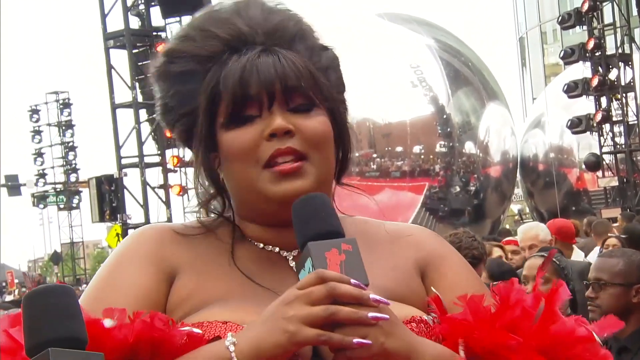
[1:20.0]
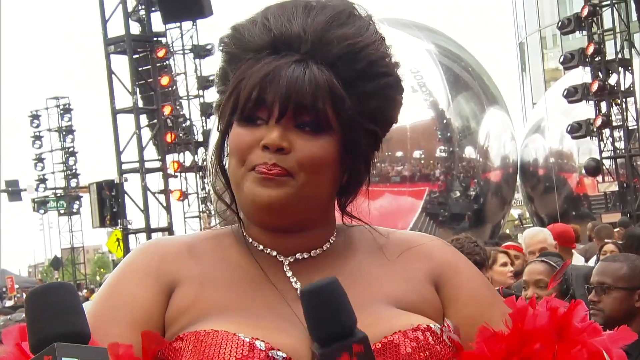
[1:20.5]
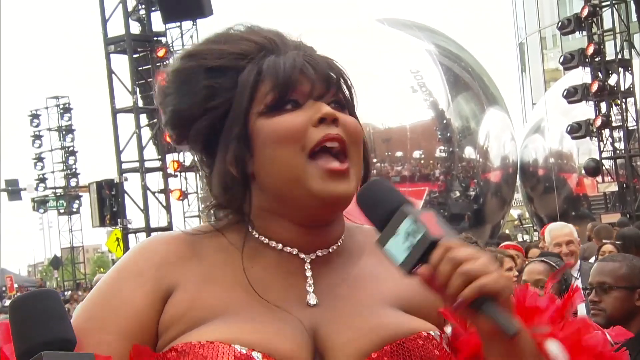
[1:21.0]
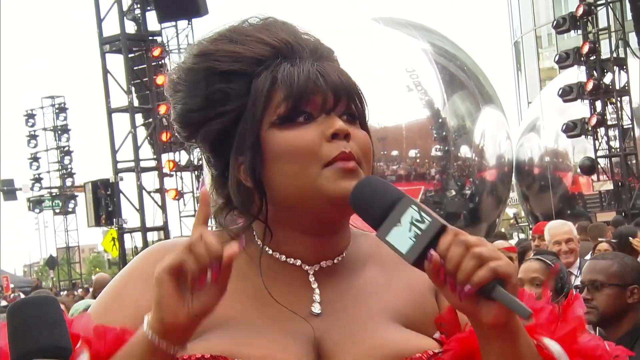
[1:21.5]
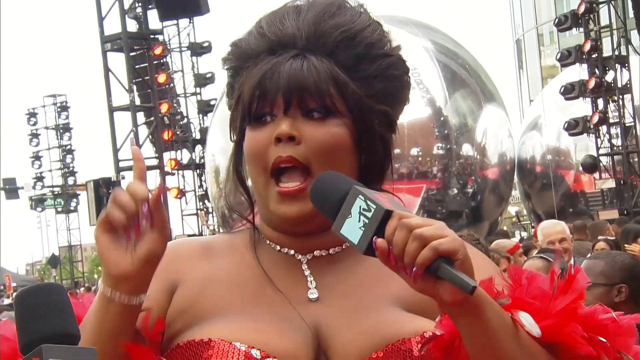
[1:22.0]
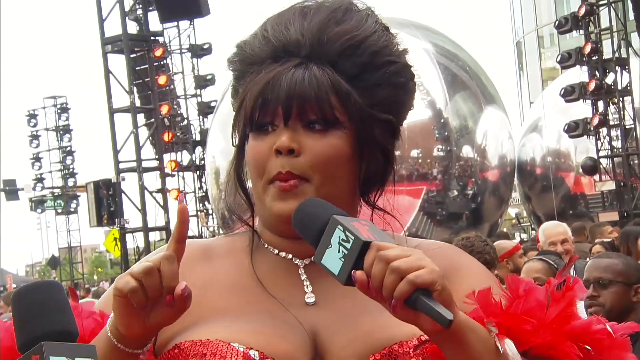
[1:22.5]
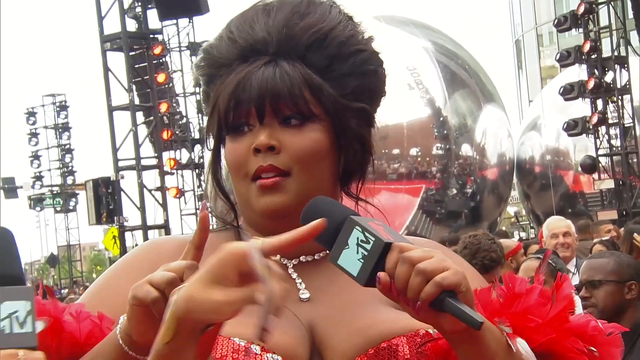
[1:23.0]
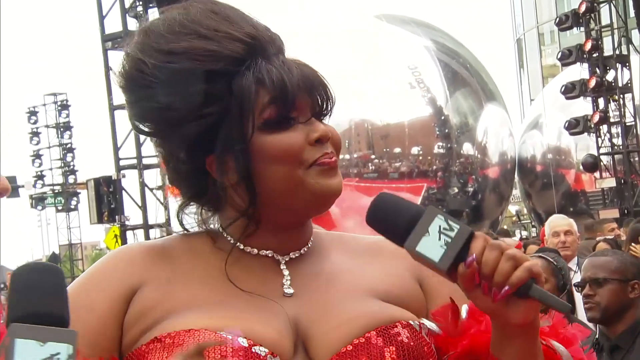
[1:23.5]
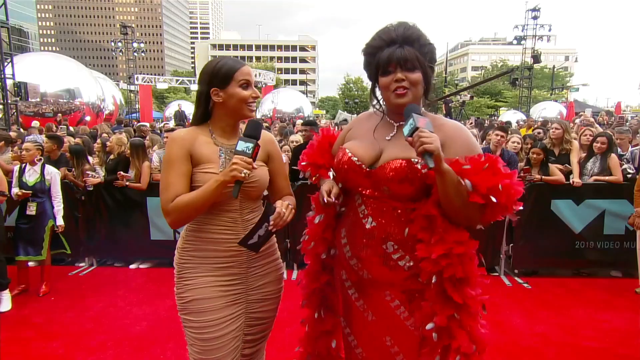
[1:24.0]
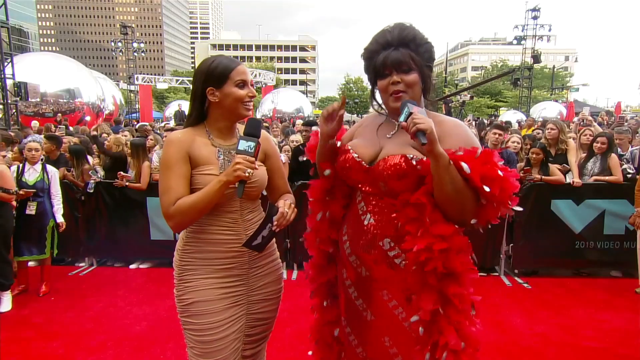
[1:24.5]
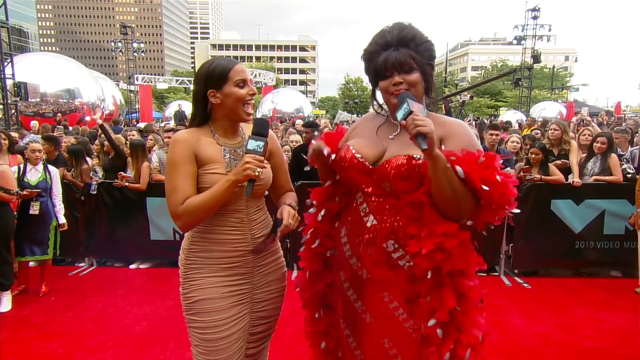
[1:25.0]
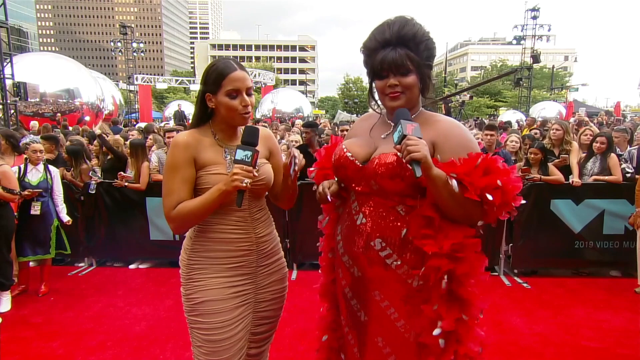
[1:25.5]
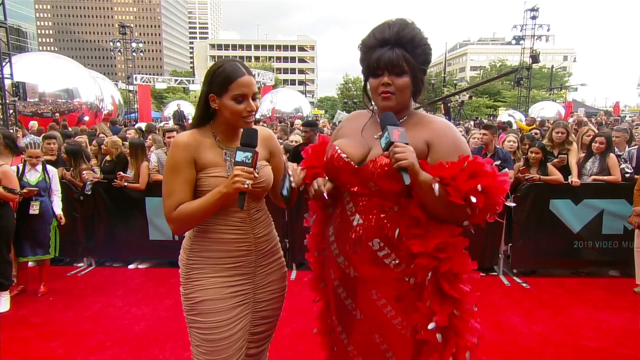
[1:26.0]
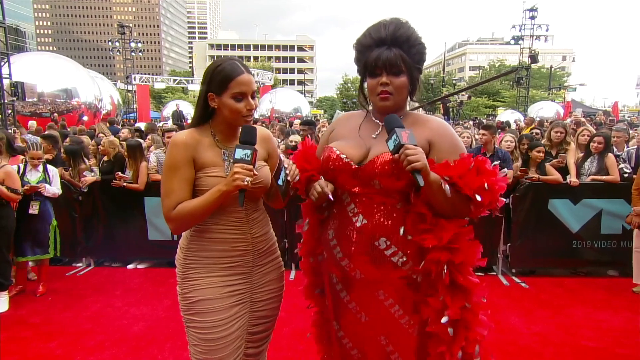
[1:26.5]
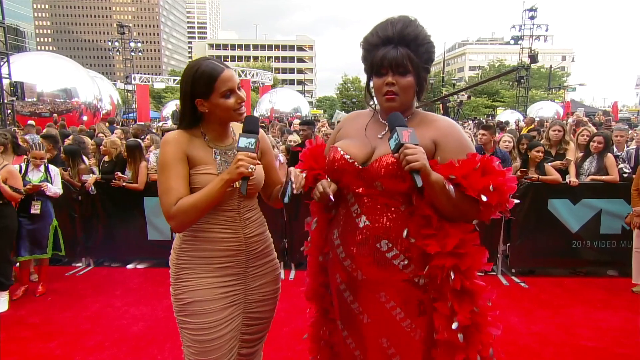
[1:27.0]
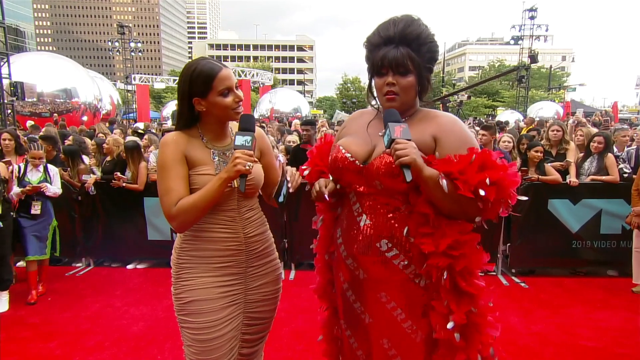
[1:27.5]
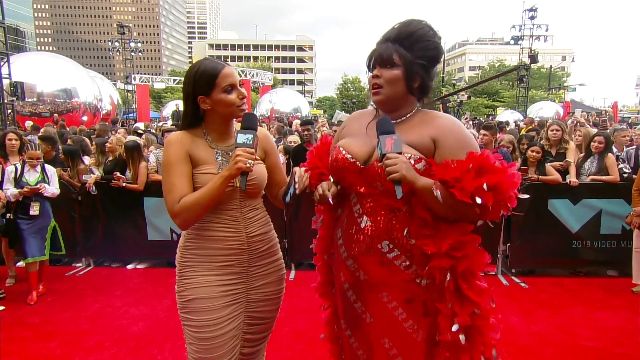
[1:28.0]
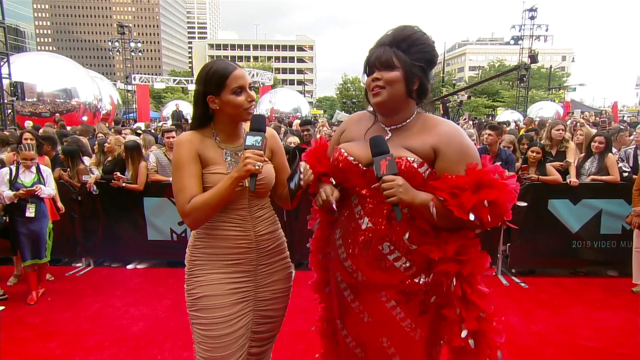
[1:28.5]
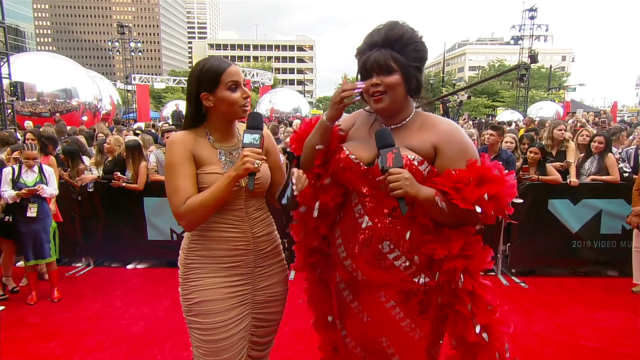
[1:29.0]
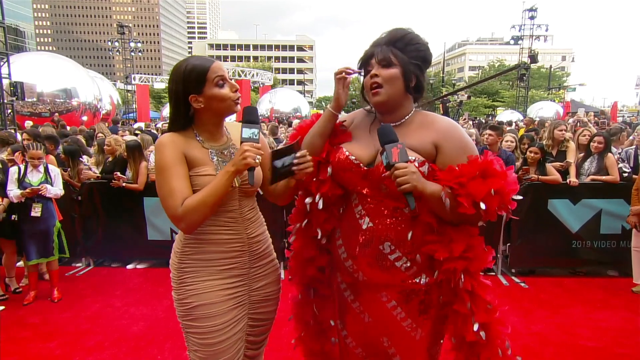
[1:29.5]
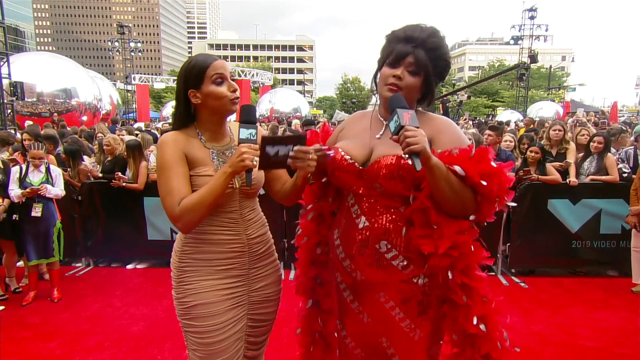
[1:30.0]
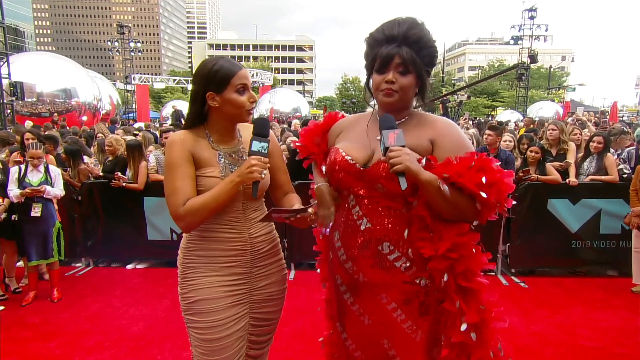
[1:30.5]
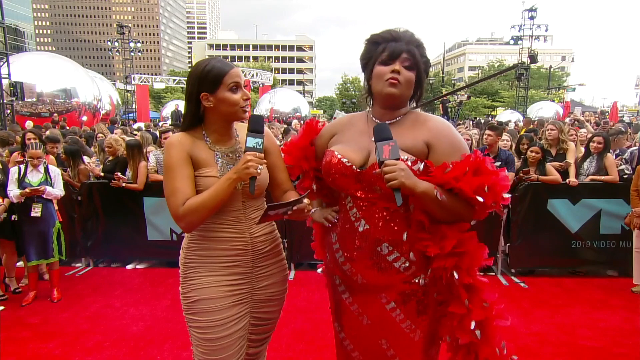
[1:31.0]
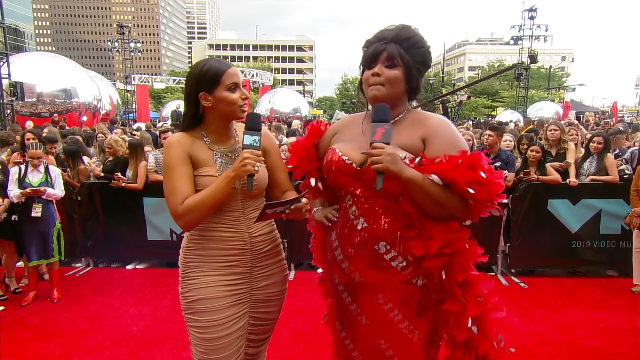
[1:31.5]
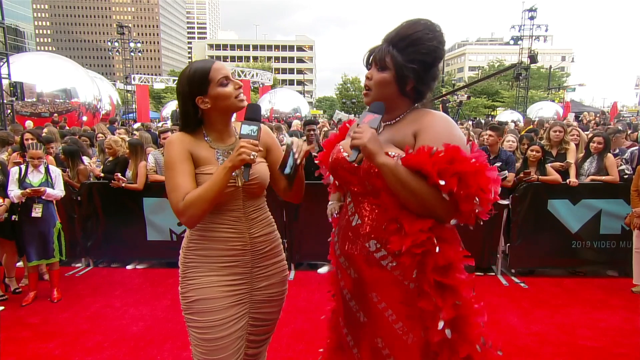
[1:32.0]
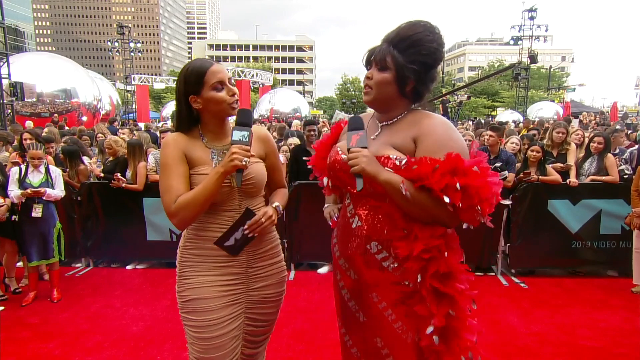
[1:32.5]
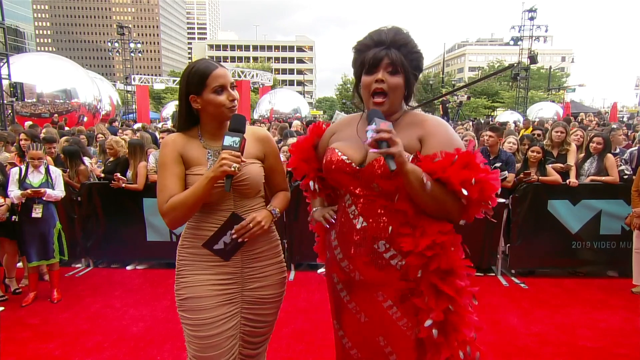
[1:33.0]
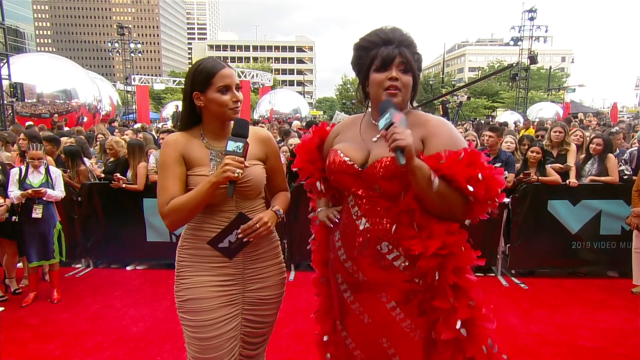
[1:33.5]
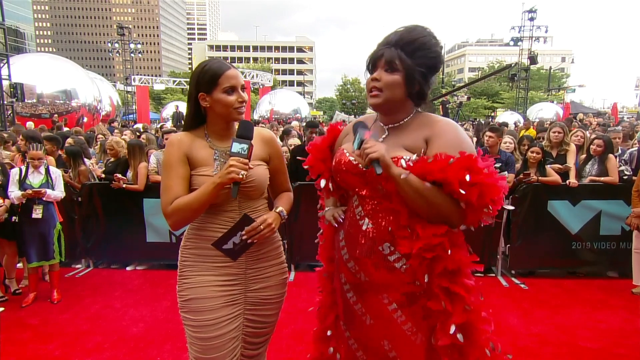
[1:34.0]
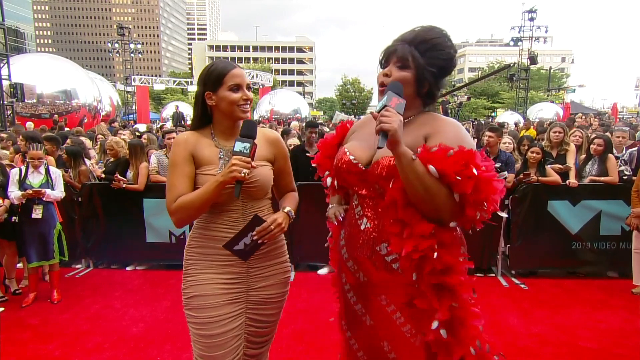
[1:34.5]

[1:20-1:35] The camera angle switches back to looking slightly up at Lizzo, who grows very animated again, holding her hand with her pointer finger extended and talking very emphatically into the camera. She looks at the interviewer, then straight ahead again, and makes a small gesture with her thumb and pointer finger as if indicating something small or just a little bit. The interviewer begins to speak, gesturing downward several times with the hand holding the card, kind of in rhythm with her words. Lizzo tosses back her bangs before answering, moves her microphone quickly back and forth in front of her as she talks, and her mouth forms an exclamation, maybe the word "whoa." The audience behind her is no longer screaming her name and watches kind of docilely in the background.